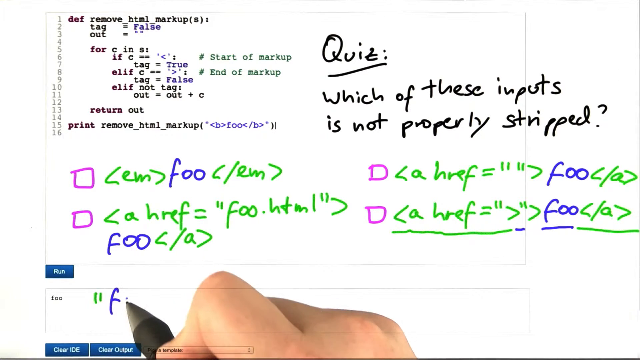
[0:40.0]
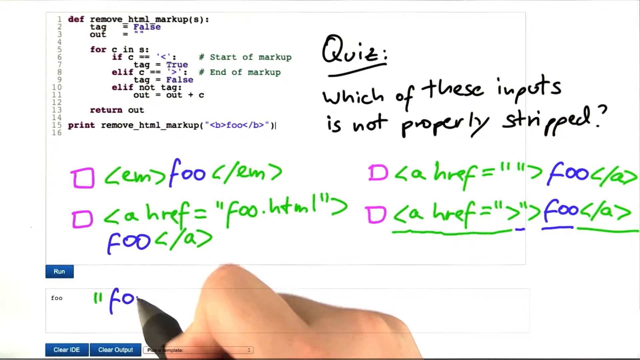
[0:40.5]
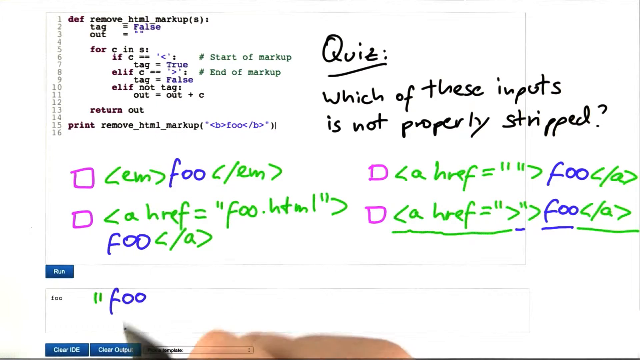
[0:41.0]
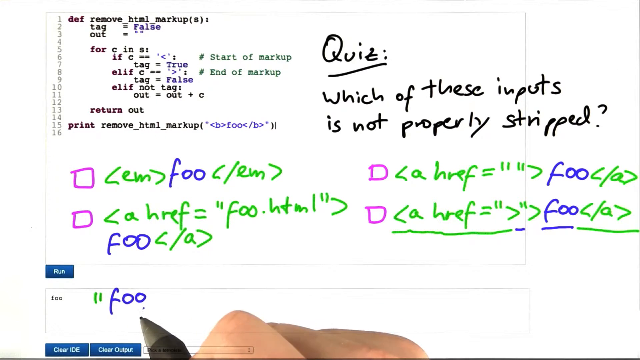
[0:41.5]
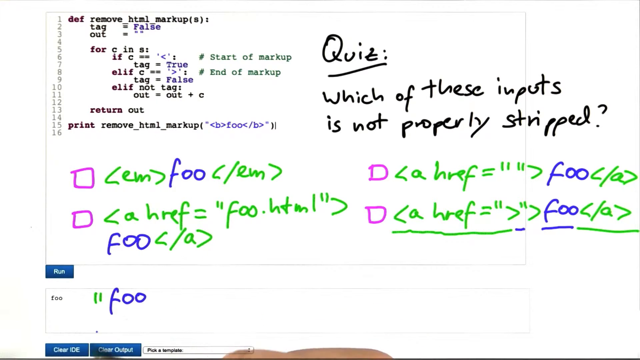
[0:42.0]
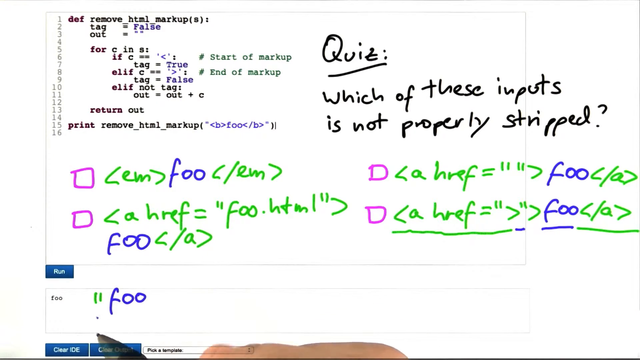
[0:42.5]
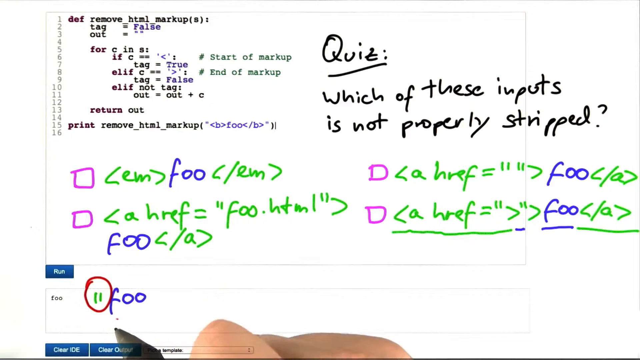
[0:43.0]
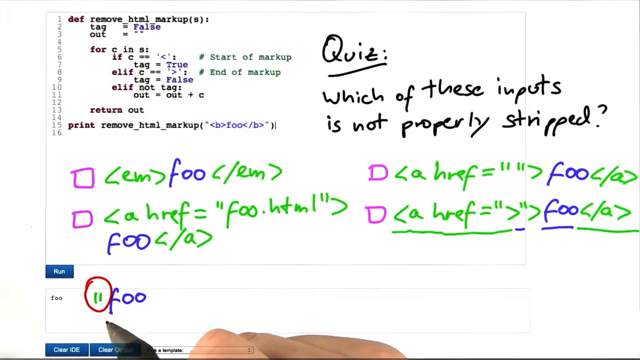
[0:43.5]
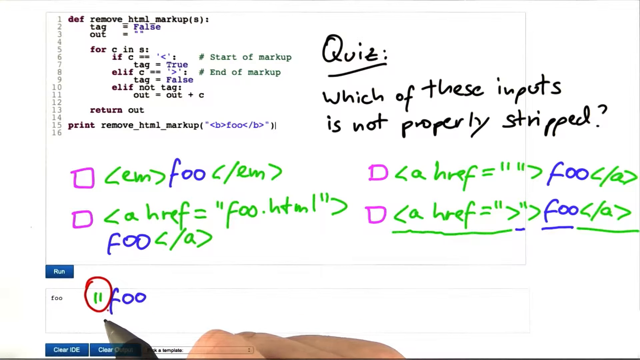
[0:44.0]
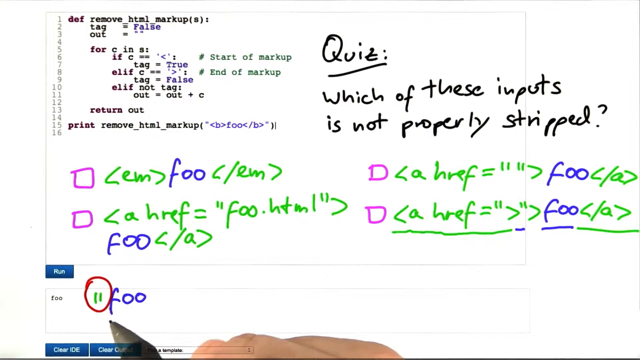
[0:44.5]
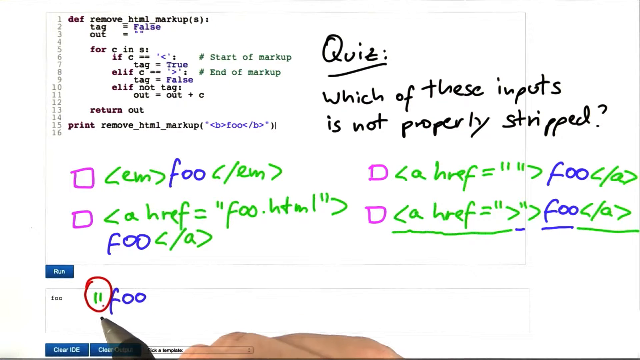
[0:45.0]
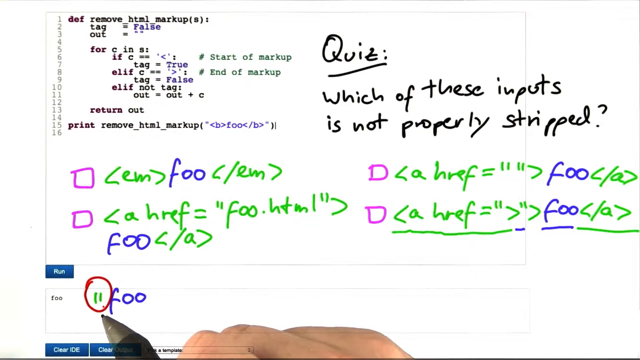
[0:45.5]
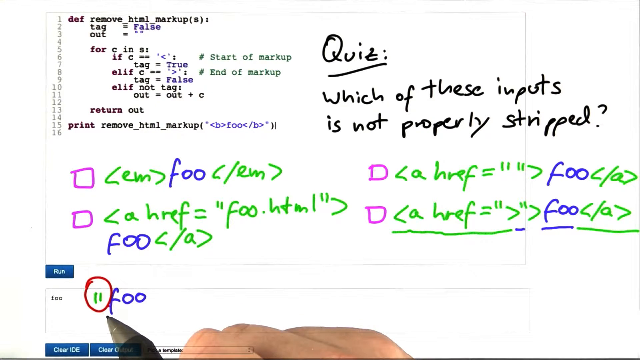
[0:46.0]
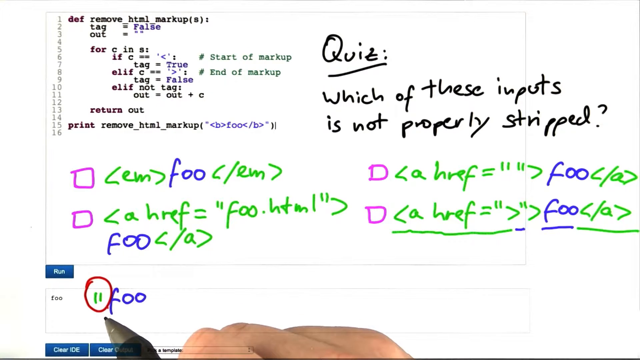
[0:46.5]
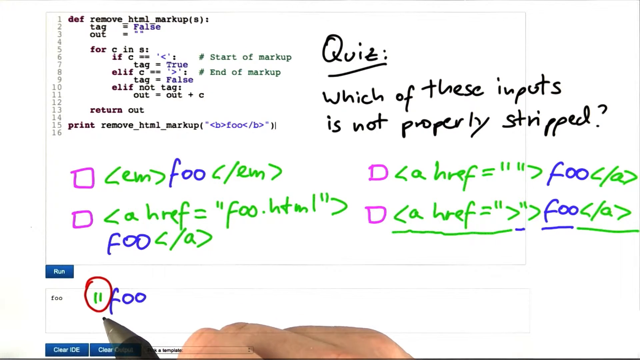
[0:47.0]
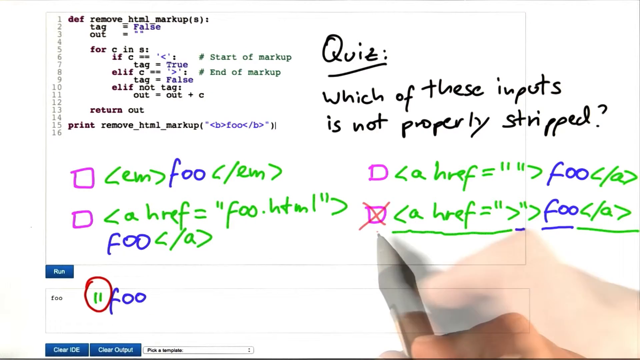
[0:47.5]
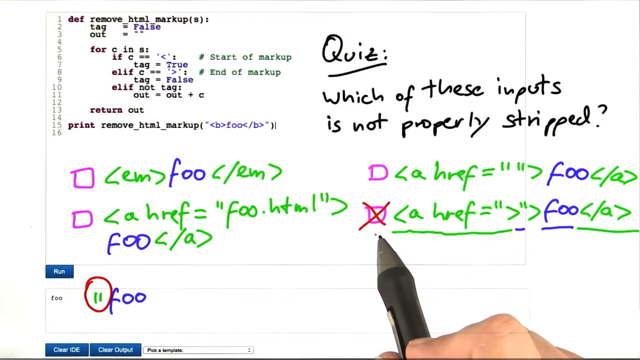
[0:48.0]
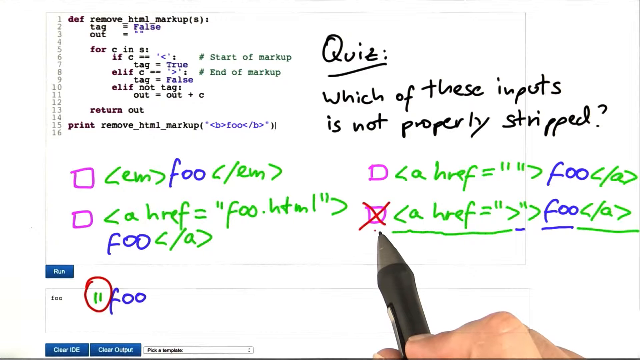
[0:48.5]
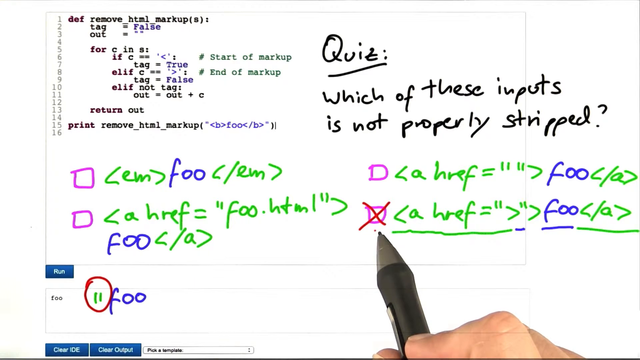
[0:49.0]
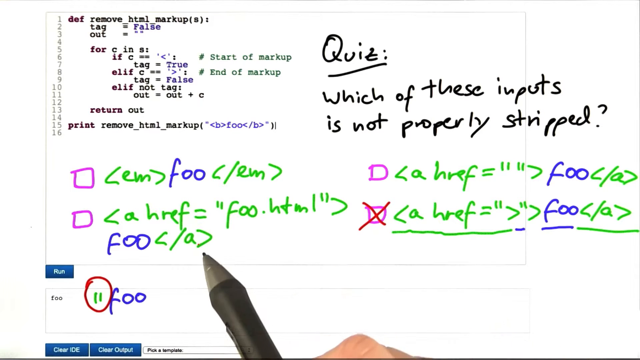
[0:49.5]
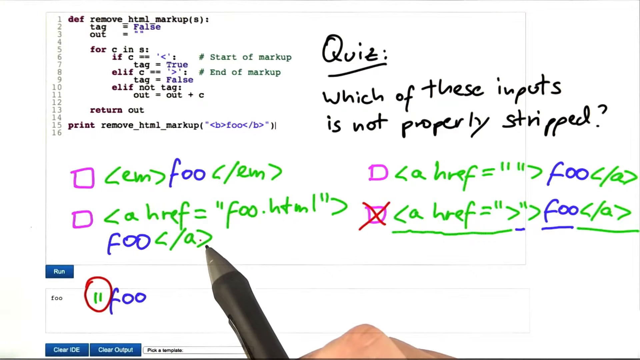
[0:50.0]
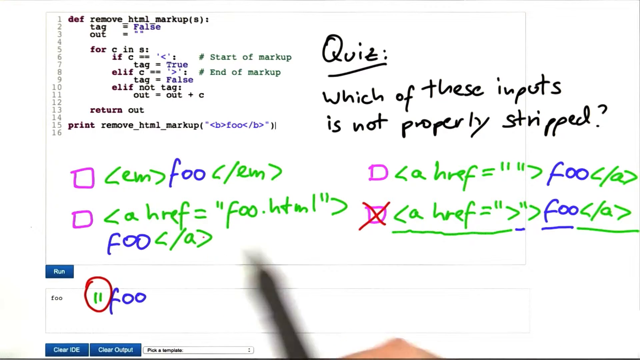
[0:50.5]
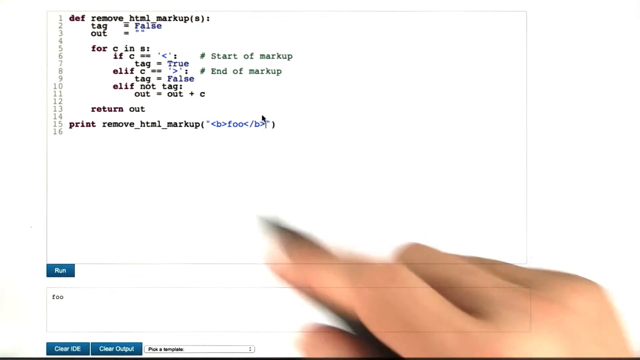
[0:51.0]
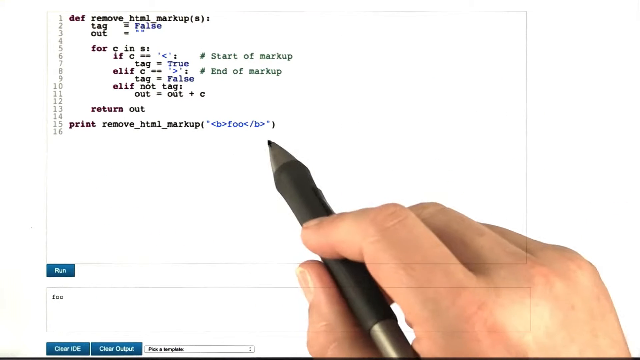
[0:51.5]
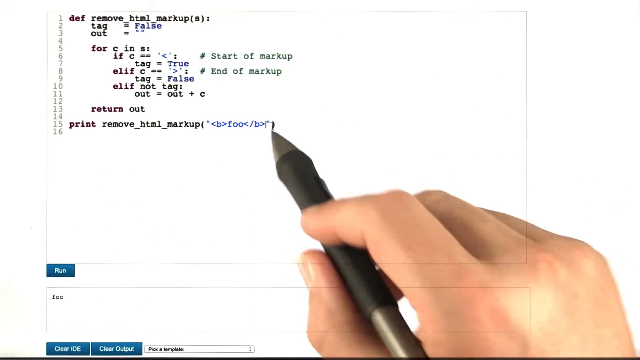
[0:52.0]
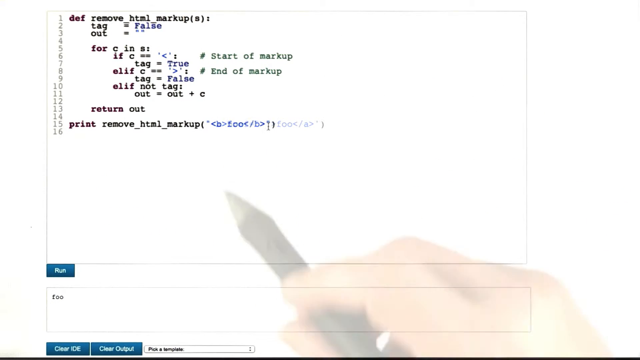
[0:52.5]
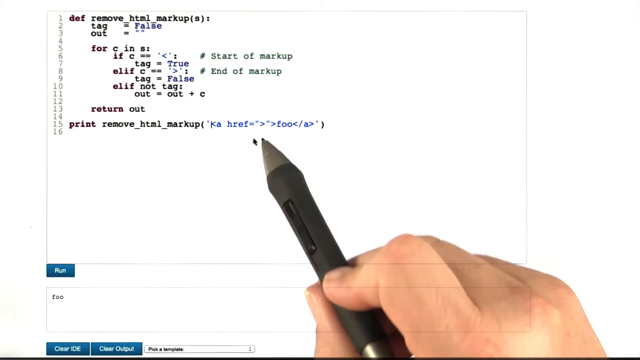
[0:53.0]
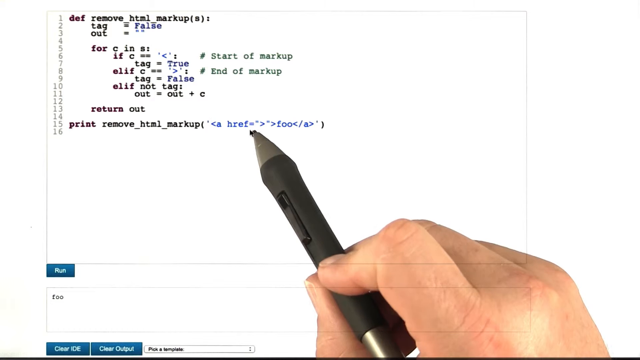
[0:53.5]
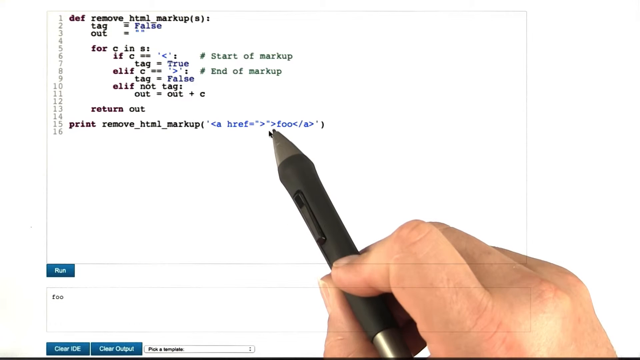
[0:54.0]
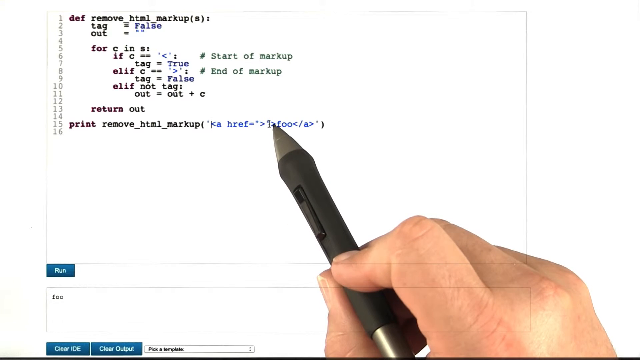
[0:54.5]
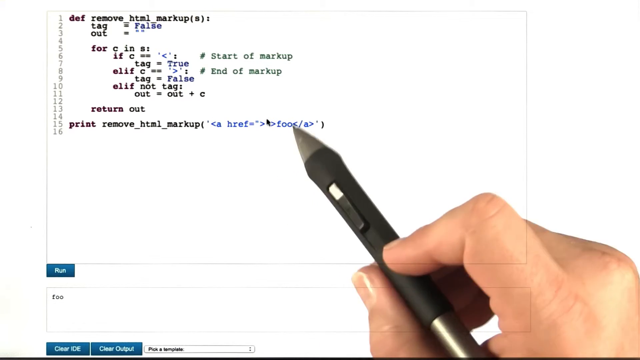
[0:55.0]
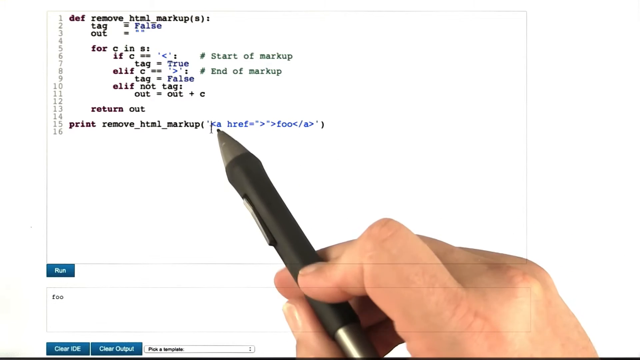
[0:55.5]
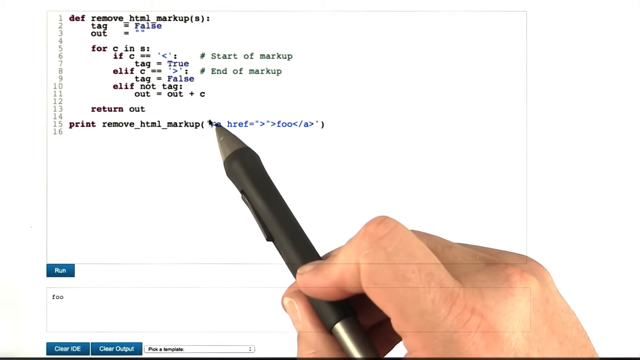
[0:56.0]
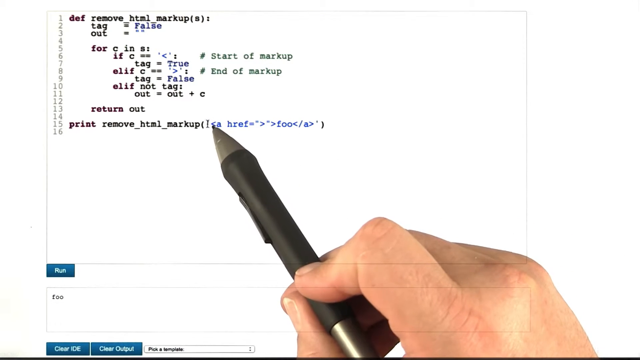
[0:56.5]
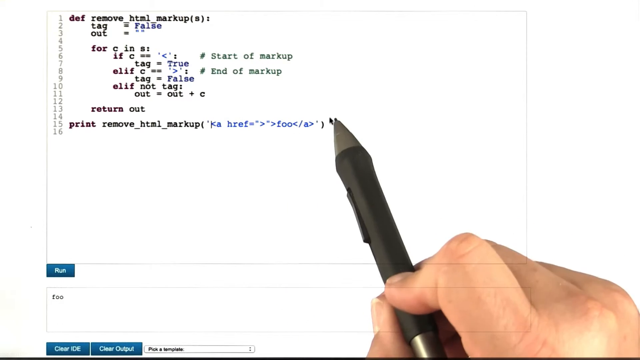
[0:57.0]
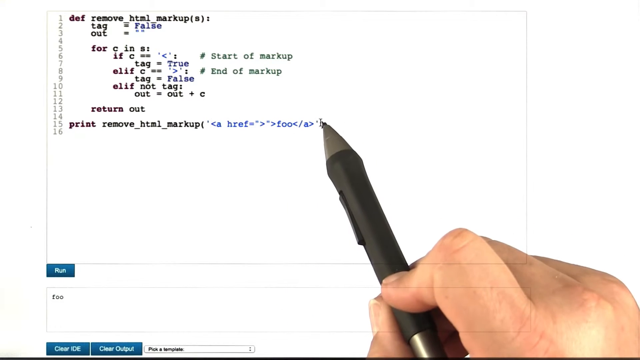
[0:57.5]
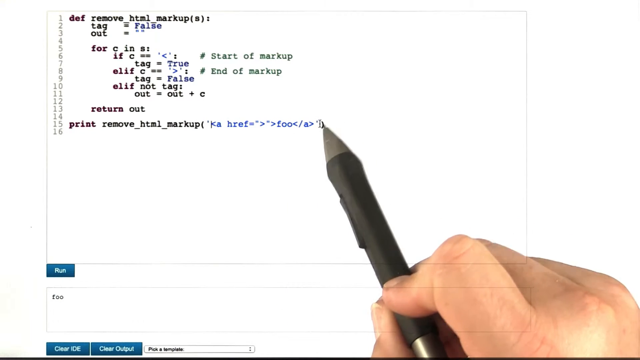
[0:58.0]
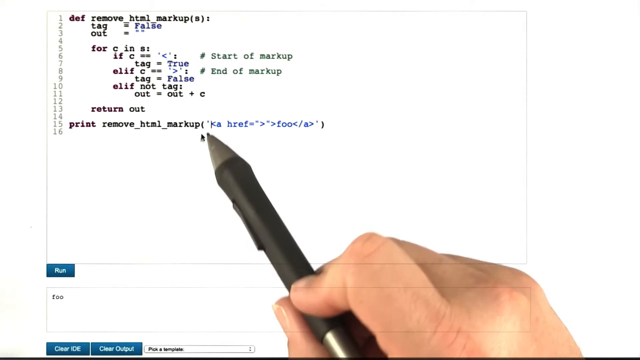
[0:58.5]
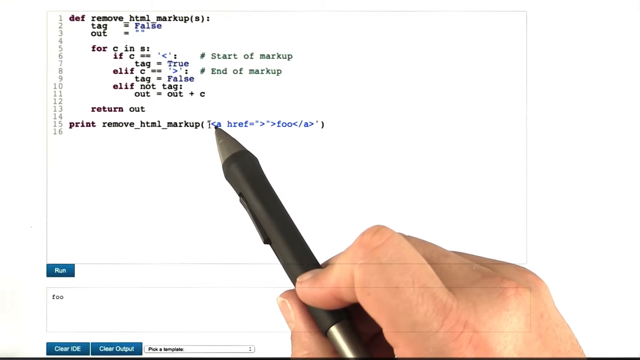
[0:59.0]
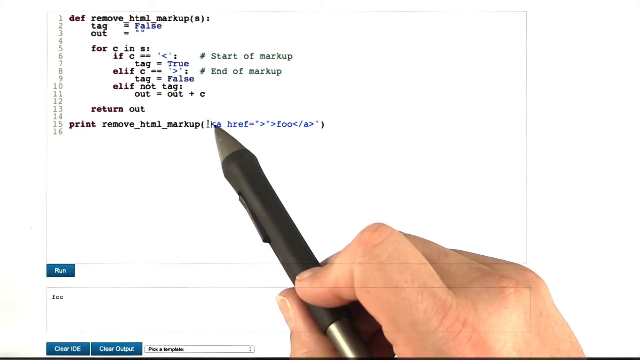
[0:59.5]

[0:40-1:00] The person appears to be indicating something, possibly introductory programming or perhaps an ordinary coded program.